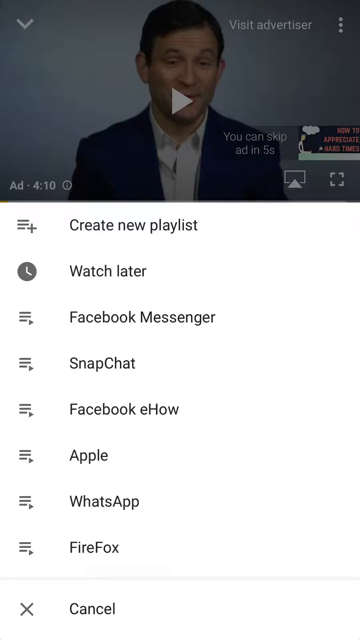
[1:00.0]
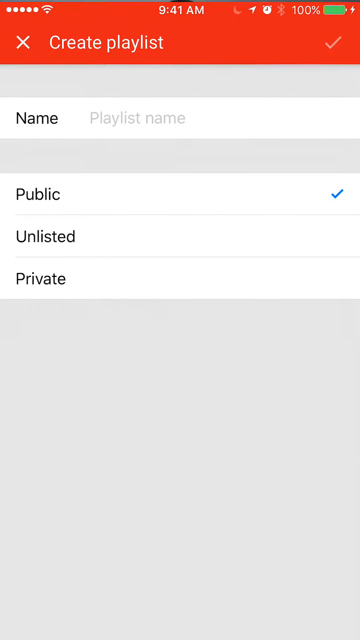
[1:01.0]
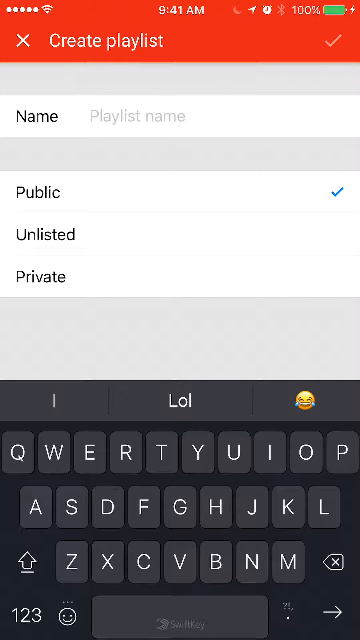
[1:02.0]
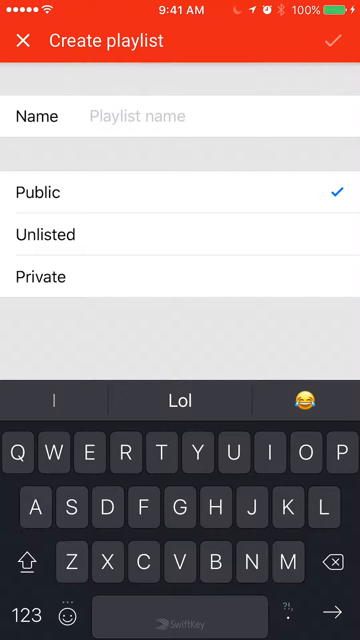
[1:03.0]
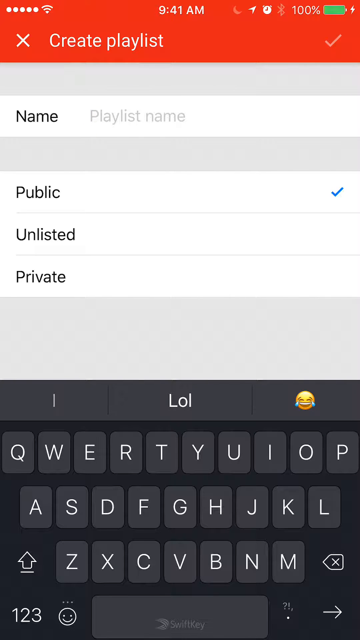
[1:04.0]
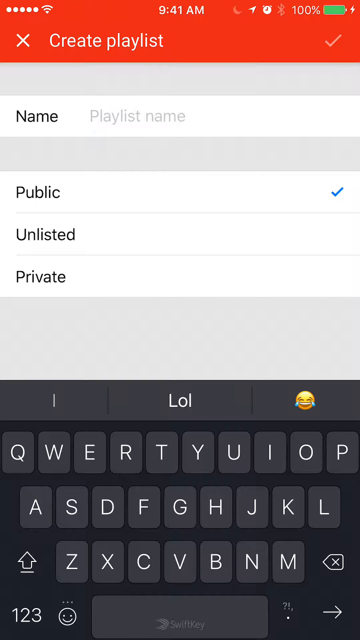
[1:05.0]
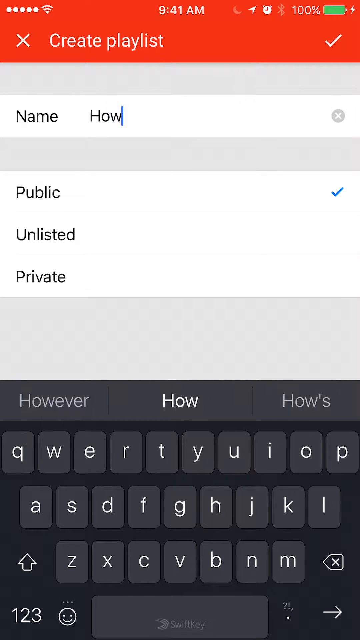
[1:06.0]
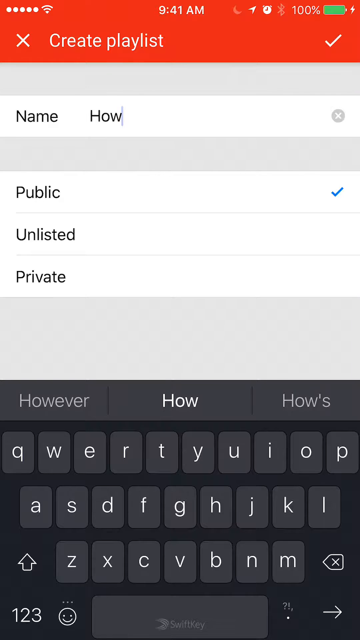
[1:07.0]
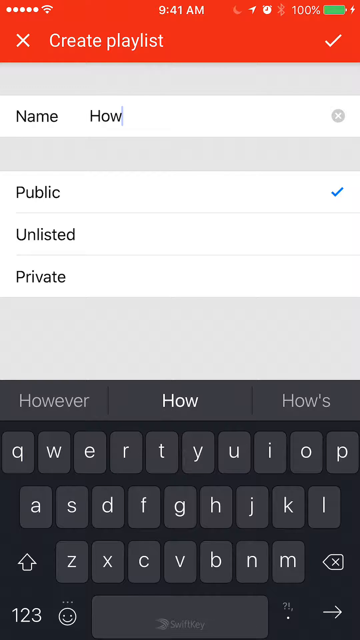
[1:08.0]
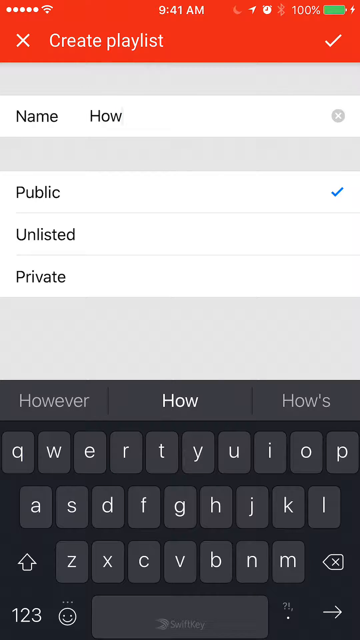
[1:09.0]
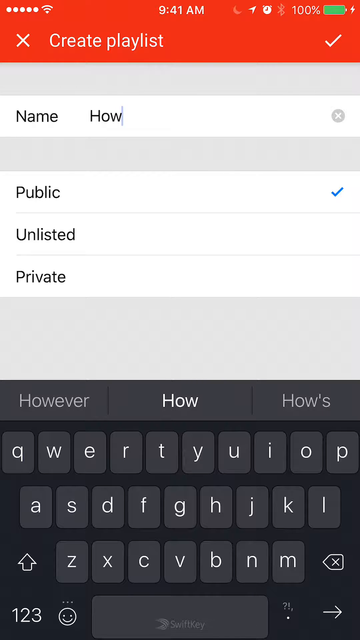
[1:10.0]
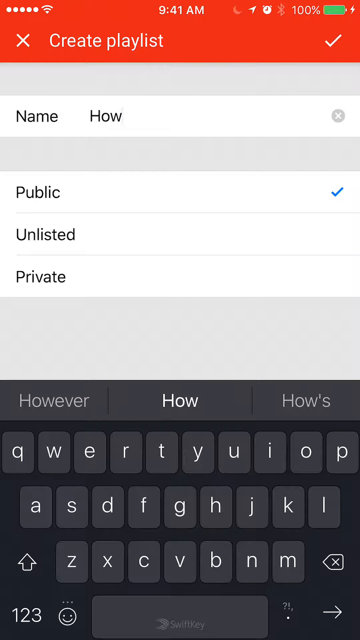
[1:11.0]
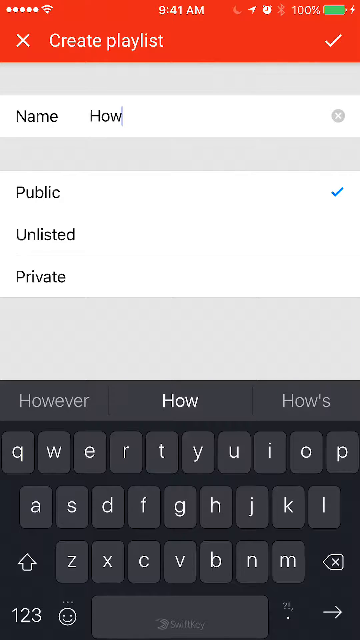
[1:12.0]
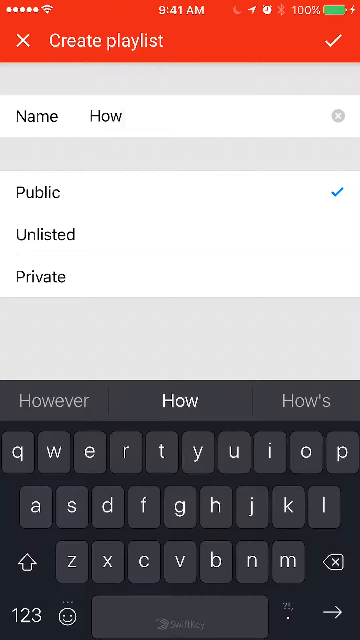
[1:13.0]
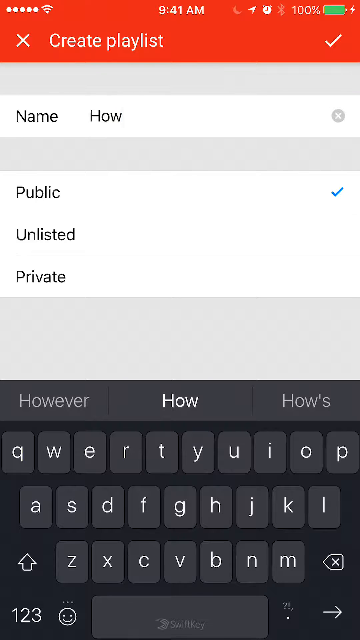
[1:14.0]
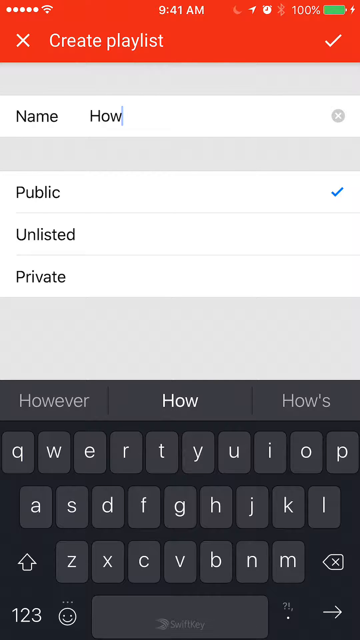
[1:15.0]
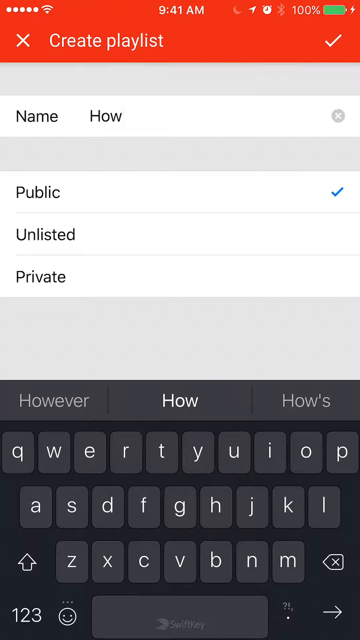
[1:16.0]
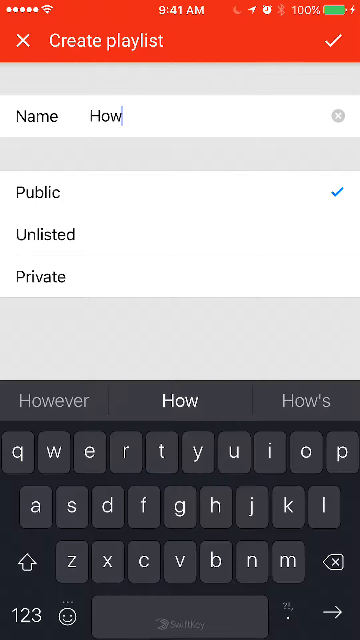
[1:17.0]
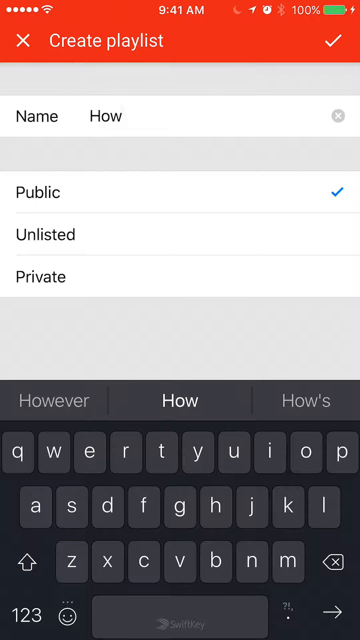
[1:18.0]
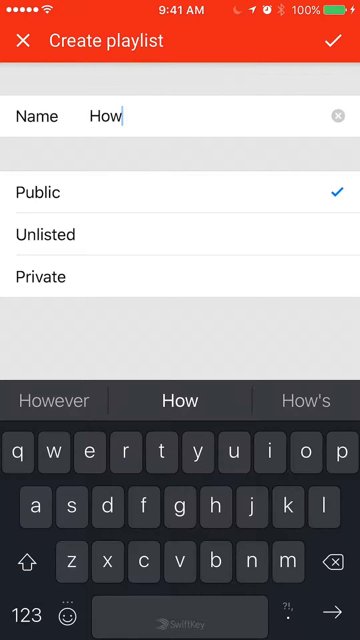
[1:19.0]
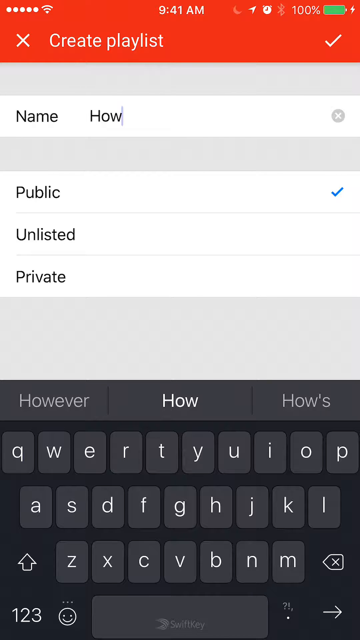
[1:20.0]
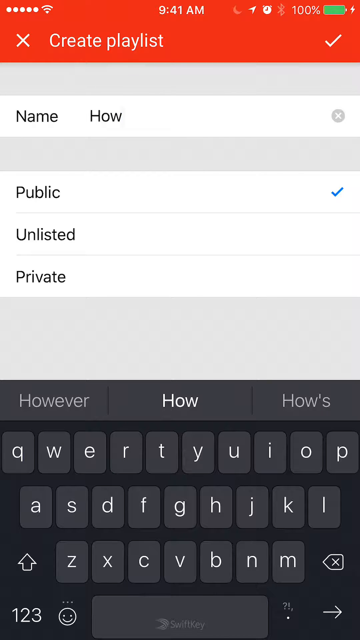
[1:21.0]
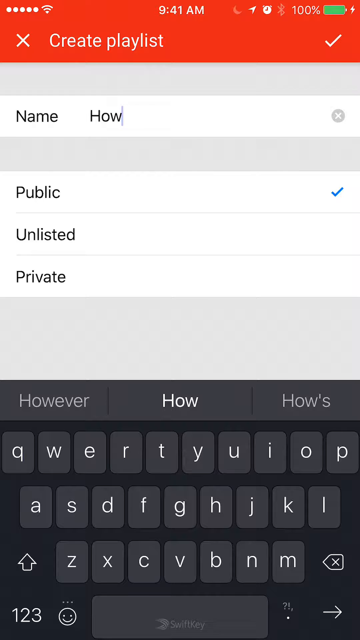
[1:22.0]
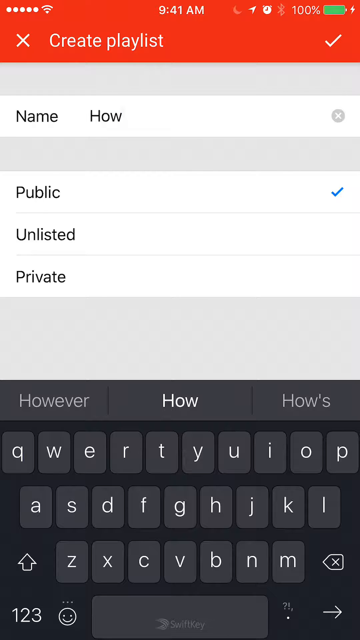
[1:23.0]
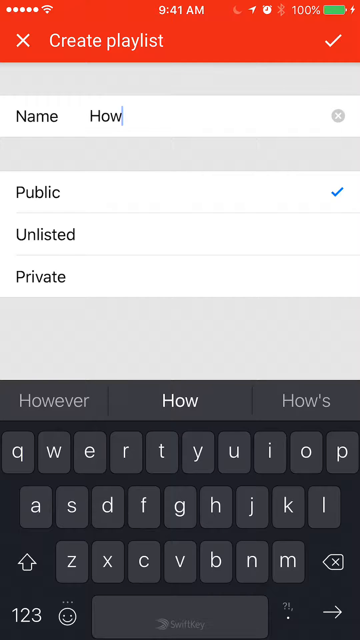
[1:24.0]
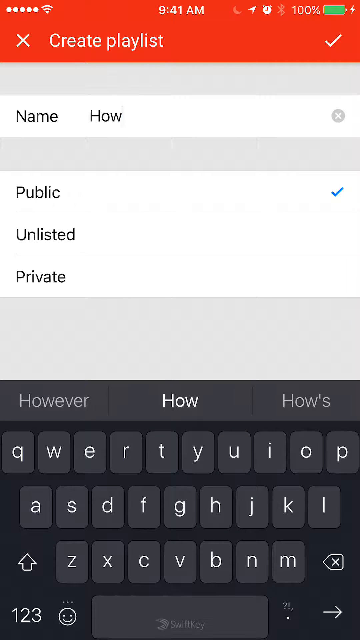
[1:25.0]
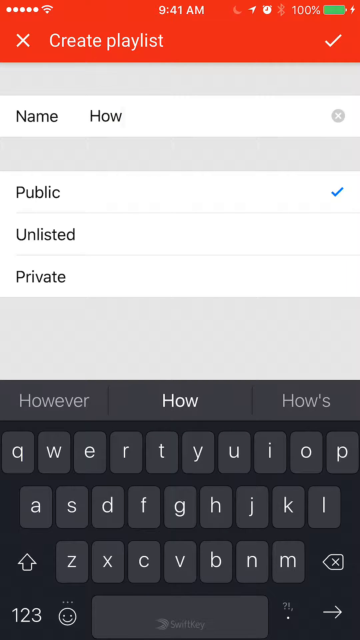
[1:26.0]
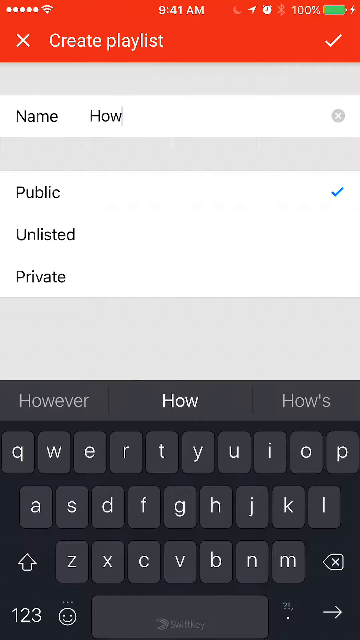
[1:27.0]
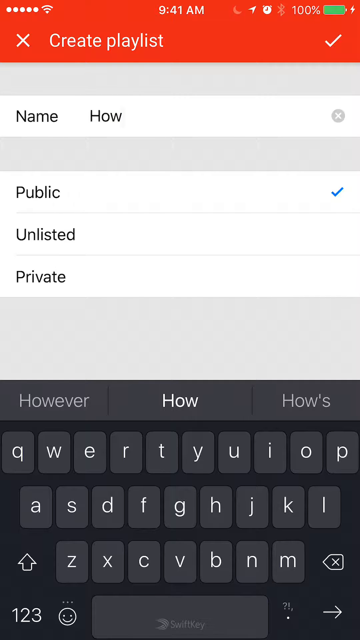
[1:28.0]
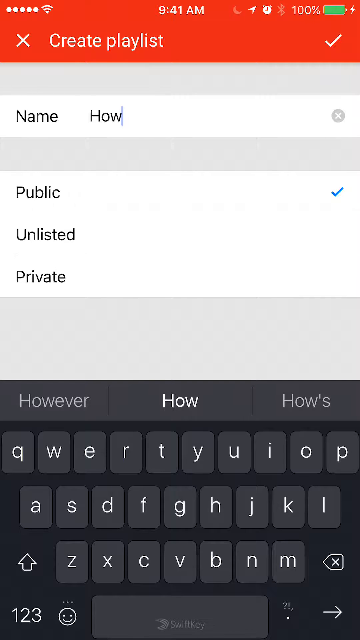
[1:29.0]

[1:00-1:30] A video on the YouTube app shows a paused ad with a brown-haired man wearing a blue blazer and a white button-down shirt speaking to the camera. A pop-up menu from the bottom of the page covers pretty much the whole page apart from the video, offering "create new playlist", "watch later", "Facebook Messenger", "Snapchat", "Facebook eHow", "Apple", "WhatsApp", "Firefox" and "cancel". The user seems to hit "create new playlist", and another window pops up, red on top, reading "create playlist", with an X on the left side and a check mark on the right side to save. In this window, a label on the left reads "name", with a text input box to its right containing grayed-out text "playlist name". Underneath is a label "public" with a blue check mark on its right, and below that labels "unlisted" and "private", neither with a check mark. The user clicks the name input box, the keyboard pops up from the bottom of the screen, and the text cursor blinks in the box. The user types the word "how", then kind of pauses for a few seconds while the cursor blinks after the word.